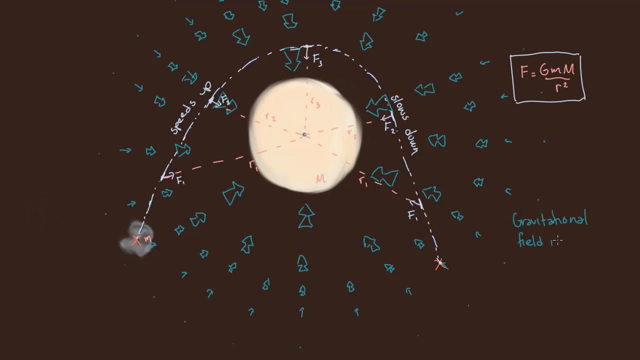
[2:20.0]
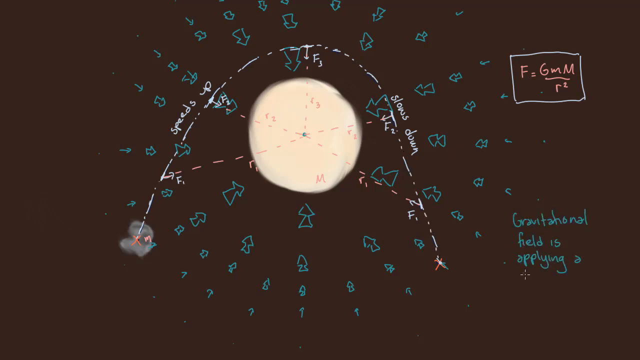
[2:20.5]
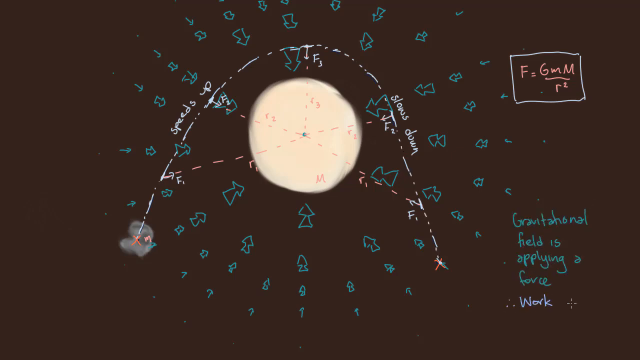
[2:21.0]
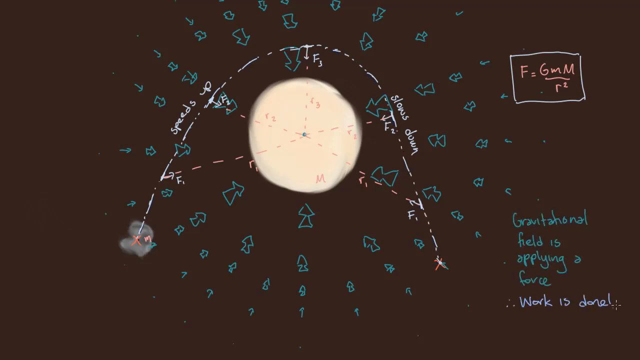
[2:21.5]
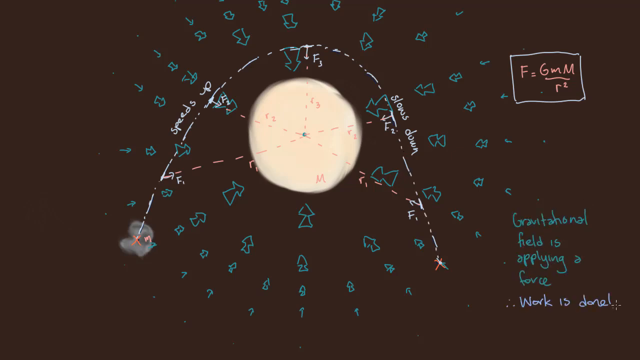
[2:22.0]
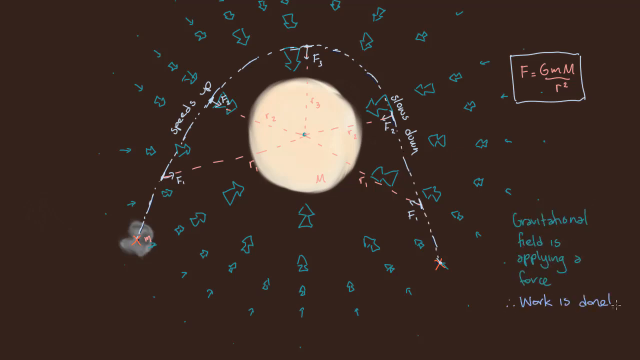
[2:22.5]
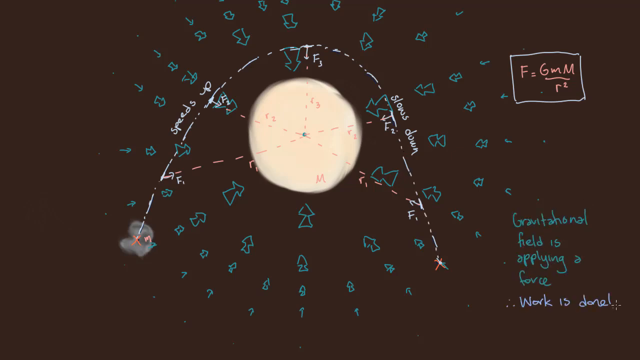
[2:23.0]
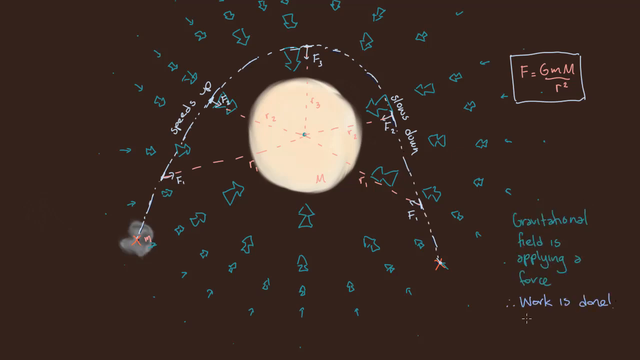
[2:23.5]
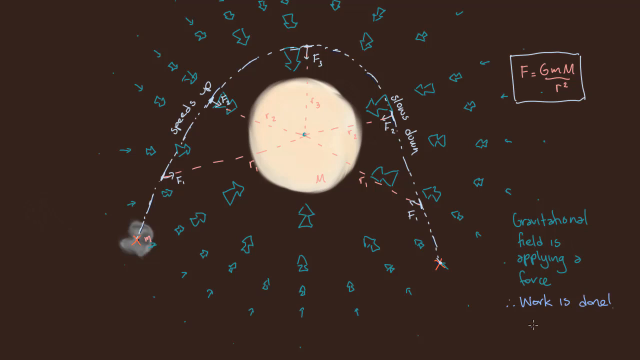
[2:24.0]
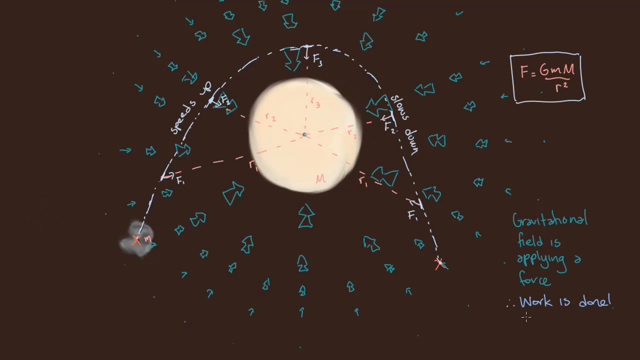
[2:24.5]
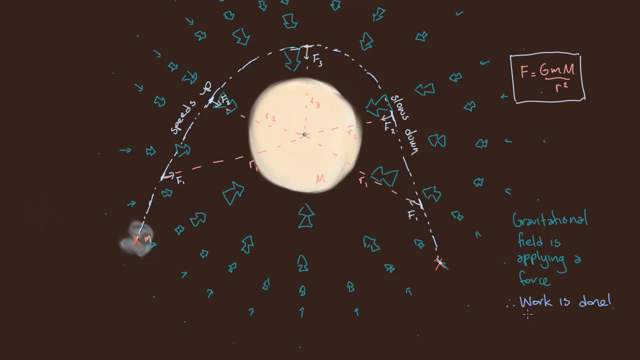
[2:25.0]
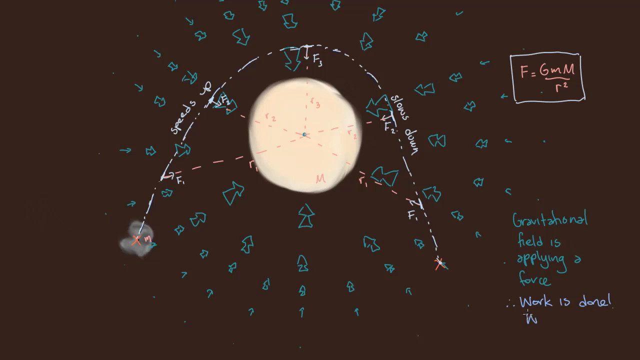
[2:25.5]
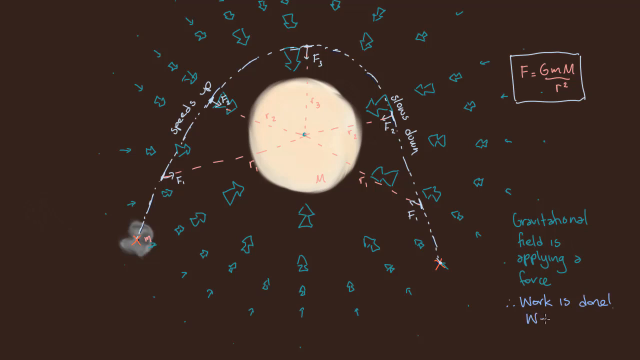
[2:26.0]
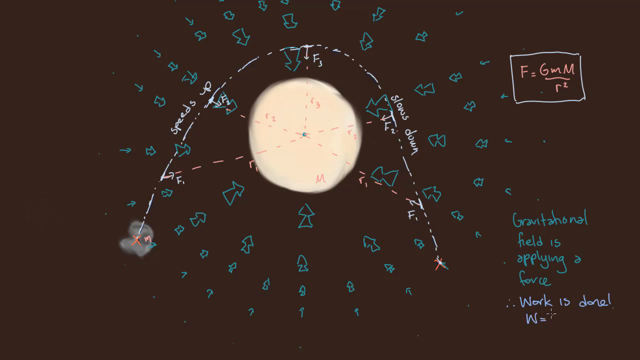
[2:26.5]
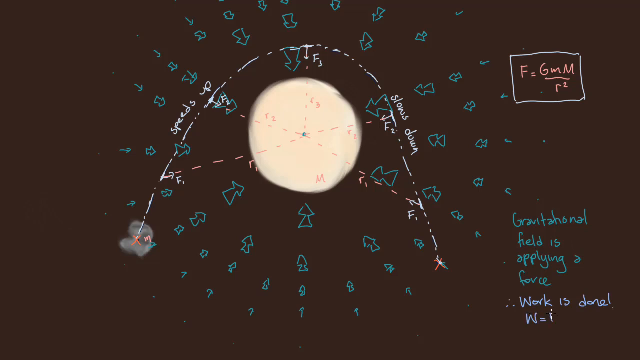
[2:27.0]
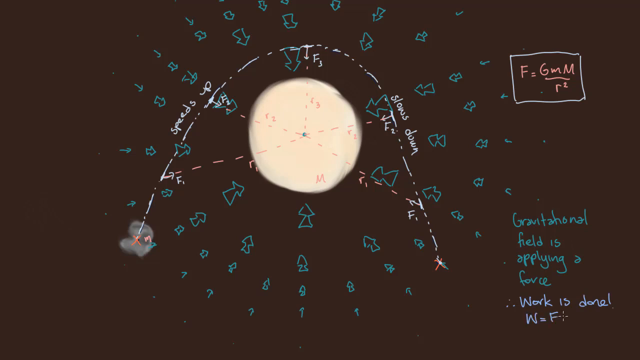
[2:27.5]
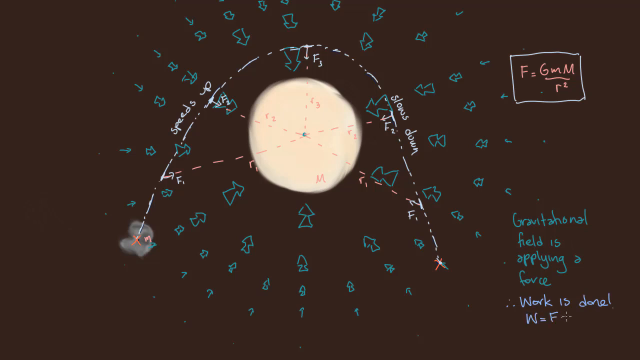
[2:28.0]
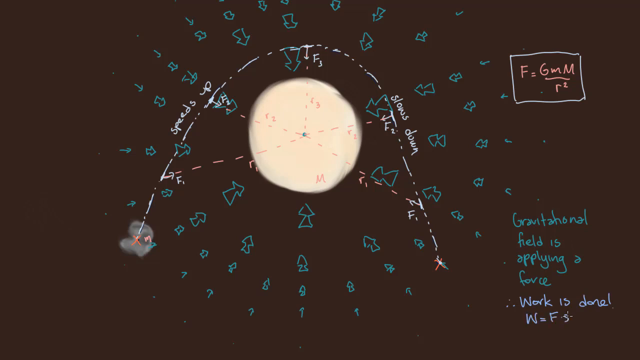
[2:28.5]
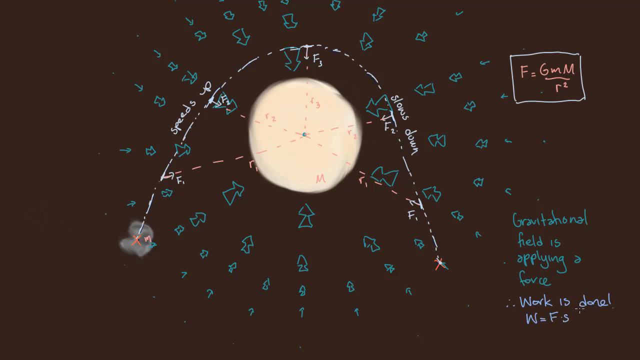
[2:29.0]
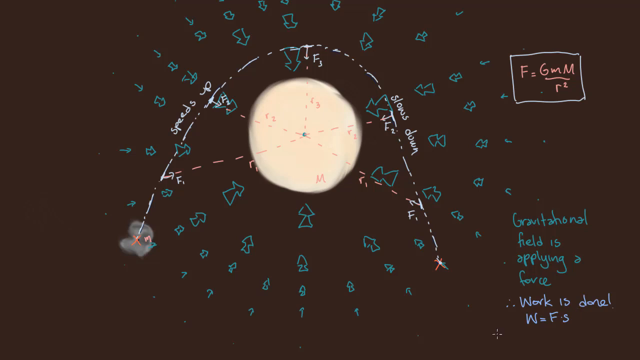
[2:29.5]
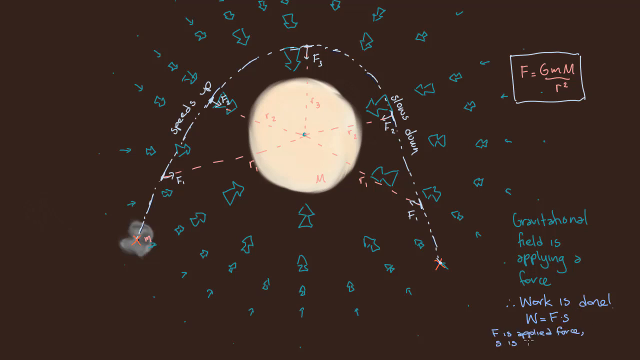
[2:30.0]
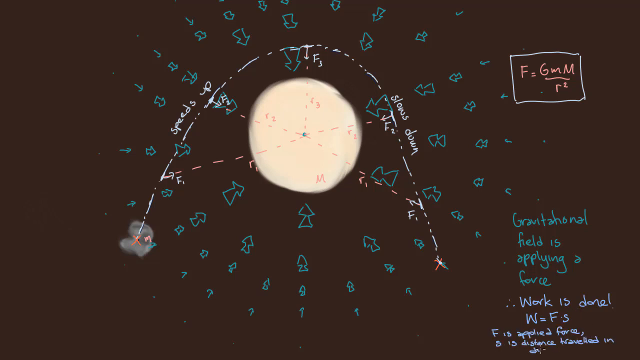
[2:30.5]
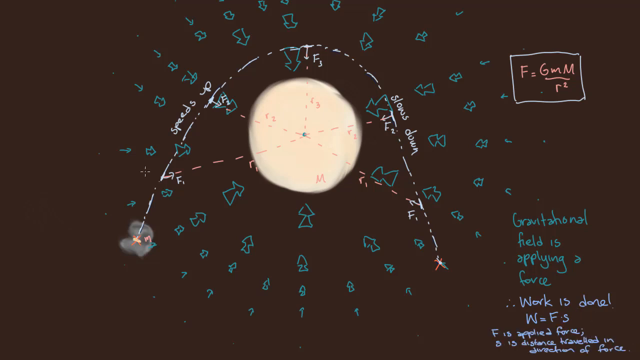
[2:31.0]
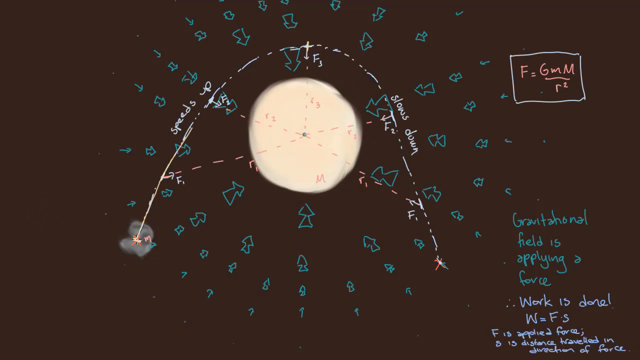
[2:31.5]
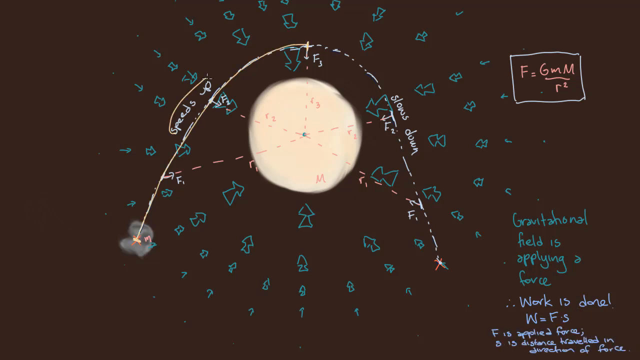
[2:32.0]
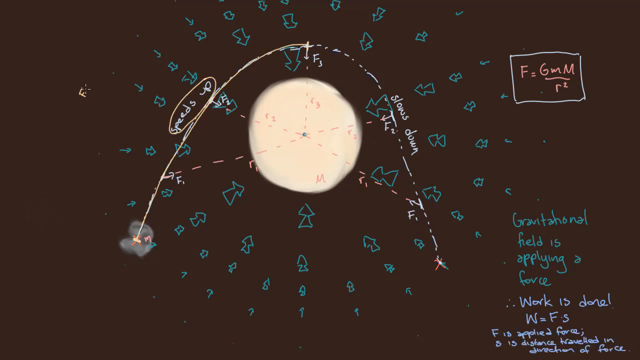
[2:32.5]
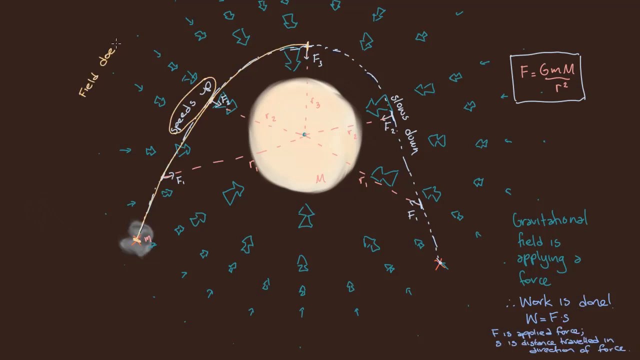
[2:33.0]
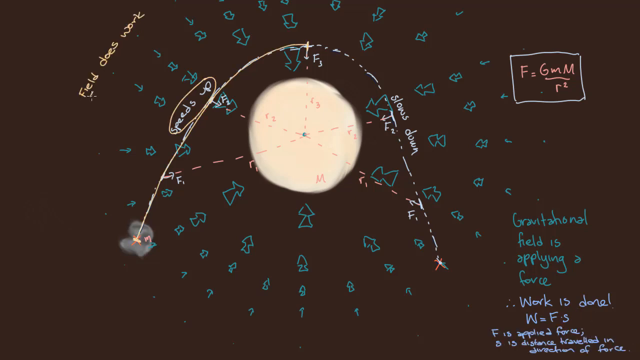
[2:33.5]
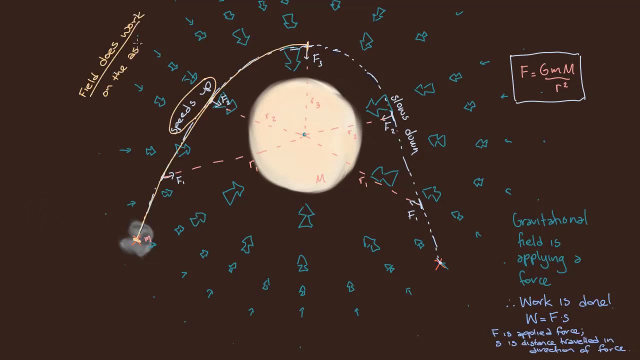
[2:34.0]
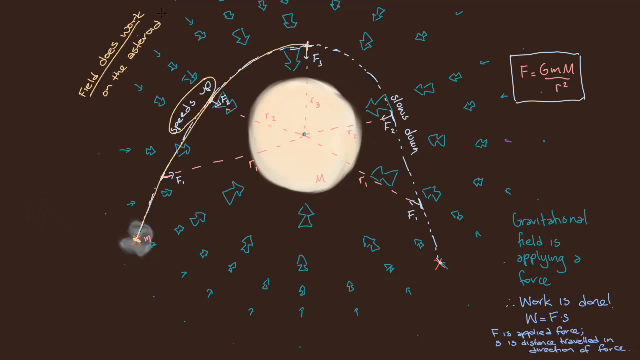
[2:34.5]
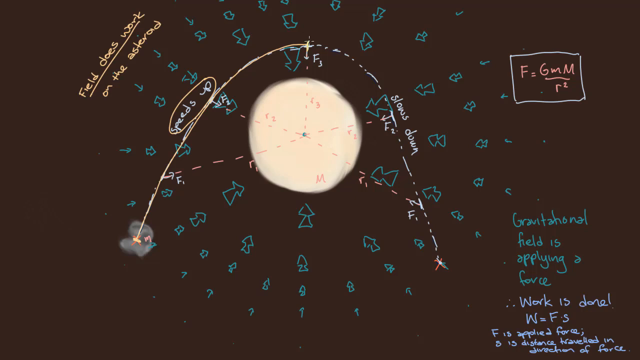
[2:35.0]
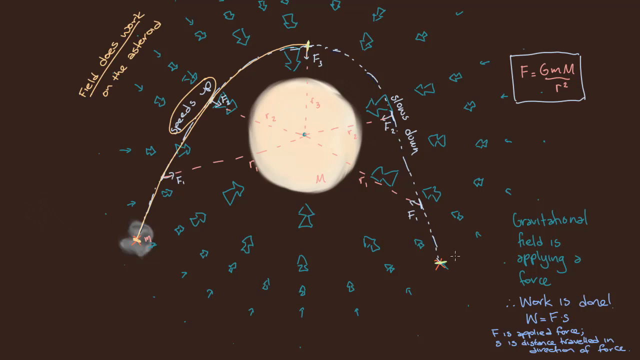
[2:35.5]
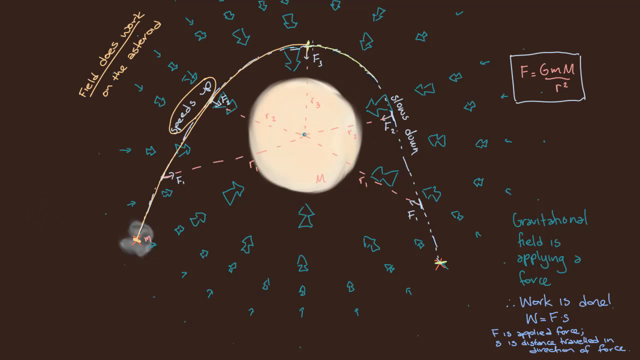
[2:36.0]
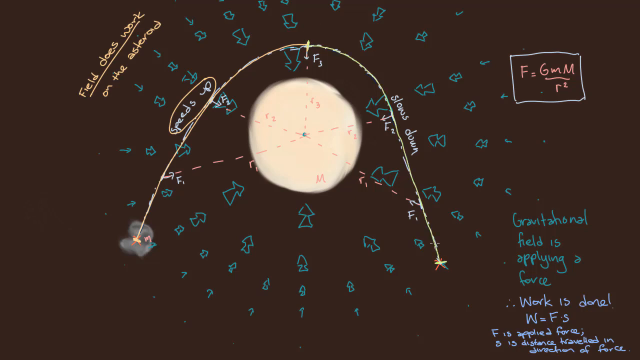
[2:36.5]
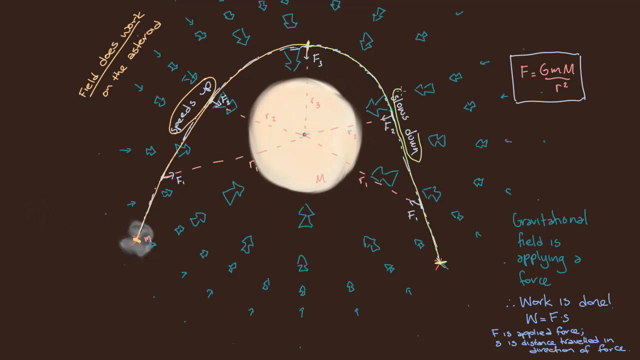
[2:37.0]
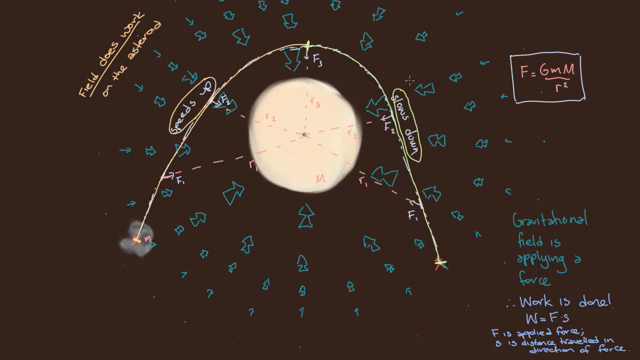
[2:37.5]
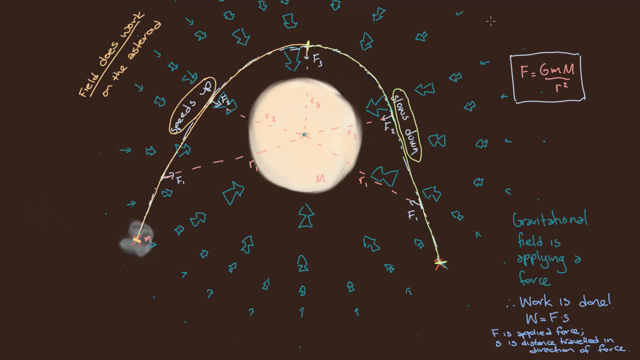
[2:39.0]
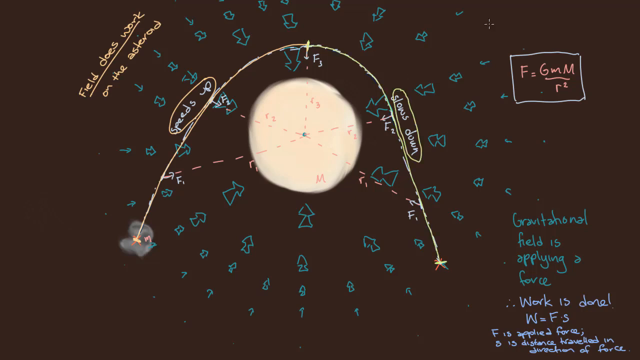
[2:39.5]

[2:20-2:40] A diagram illustrates gravitational potential energy, with the gravitational field represented by the moon. The right side of the diagram shows an object falling and releasing its stored energy as kinetic energy. The formula GPE = mgh is shown on the diagram, with m as mass, g as the acceleration due to gravity, and h as the height above the reference point.